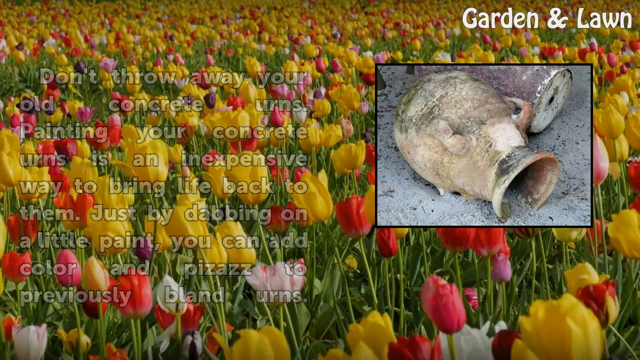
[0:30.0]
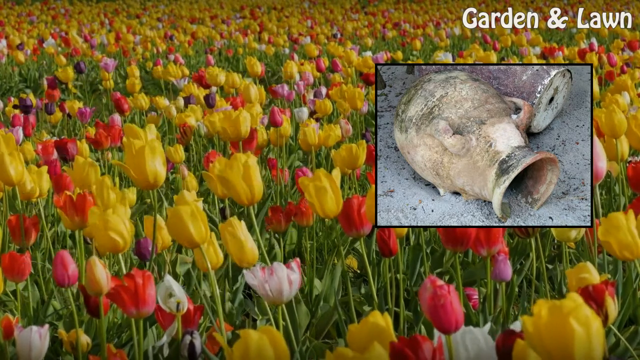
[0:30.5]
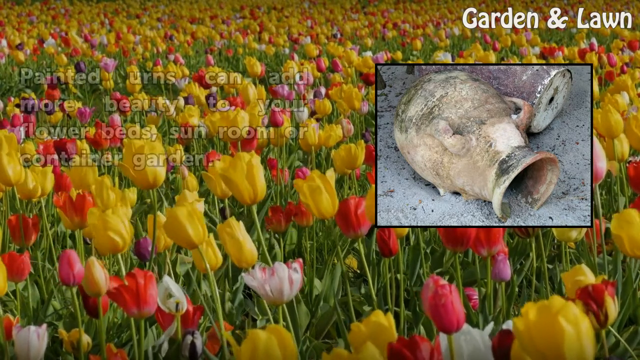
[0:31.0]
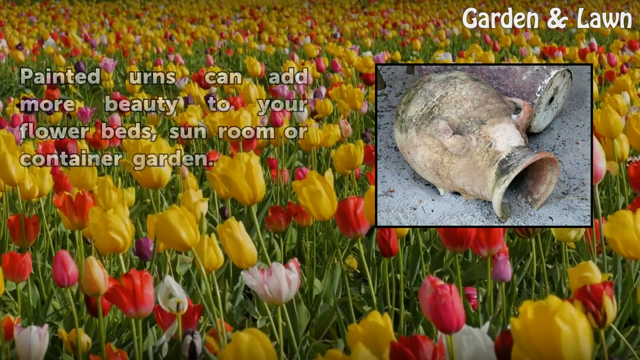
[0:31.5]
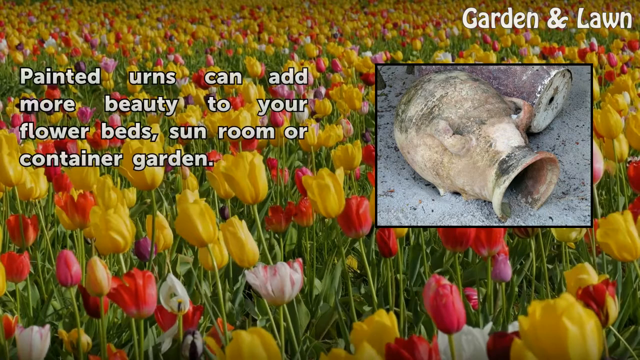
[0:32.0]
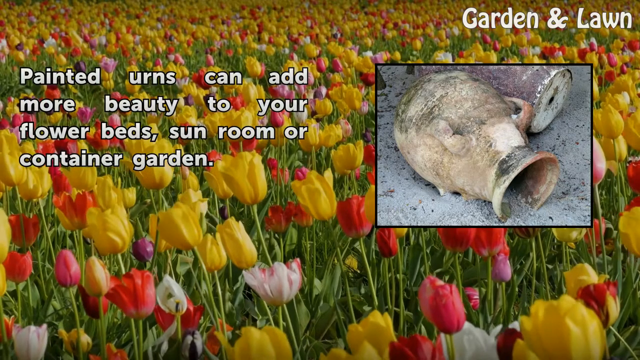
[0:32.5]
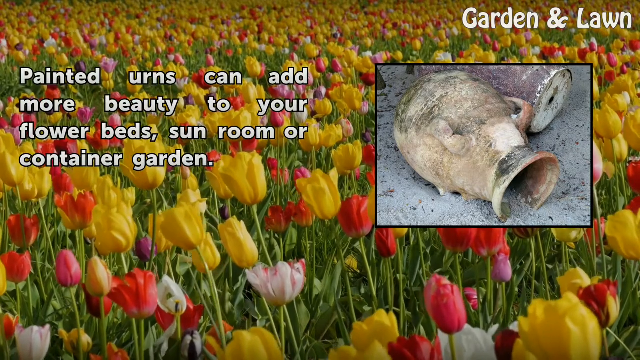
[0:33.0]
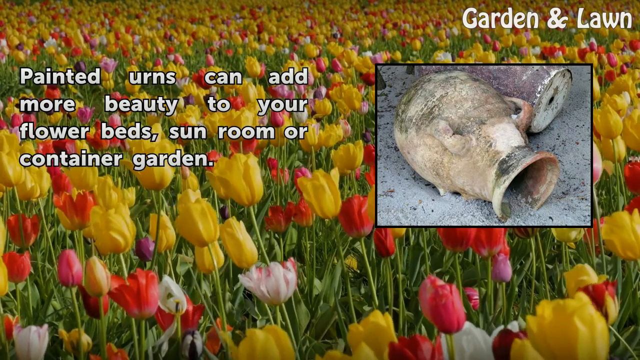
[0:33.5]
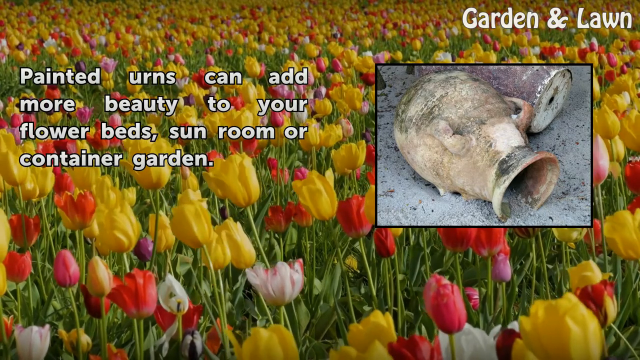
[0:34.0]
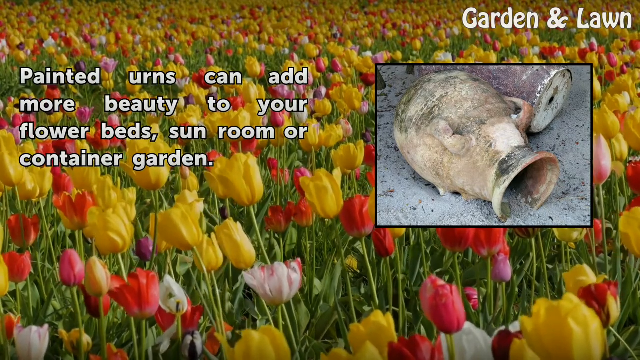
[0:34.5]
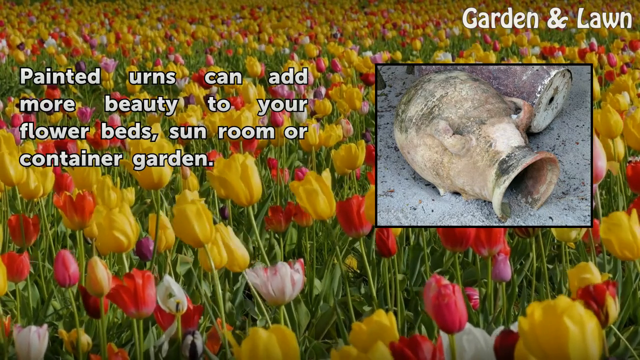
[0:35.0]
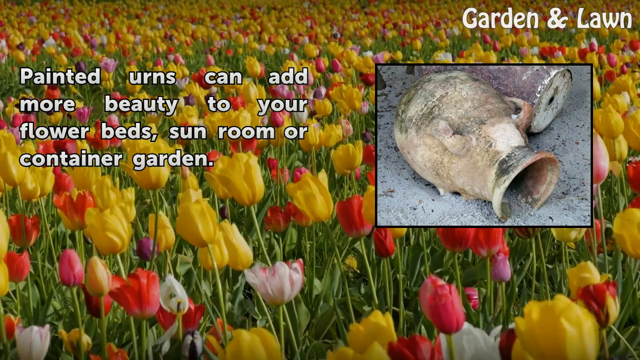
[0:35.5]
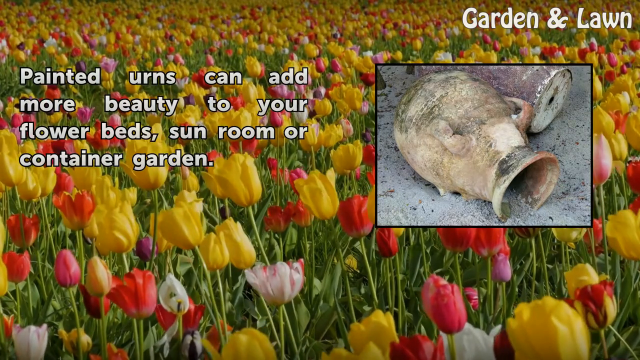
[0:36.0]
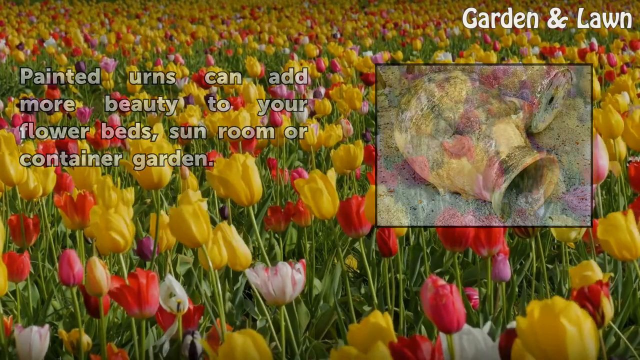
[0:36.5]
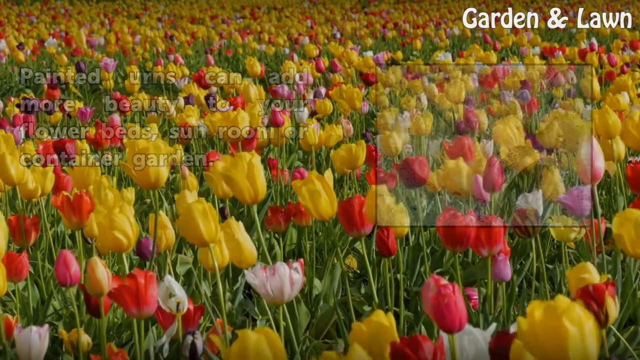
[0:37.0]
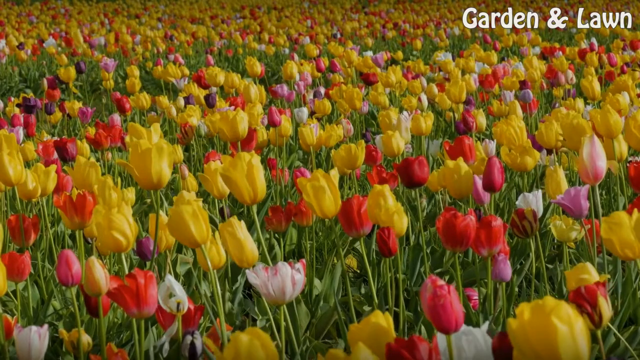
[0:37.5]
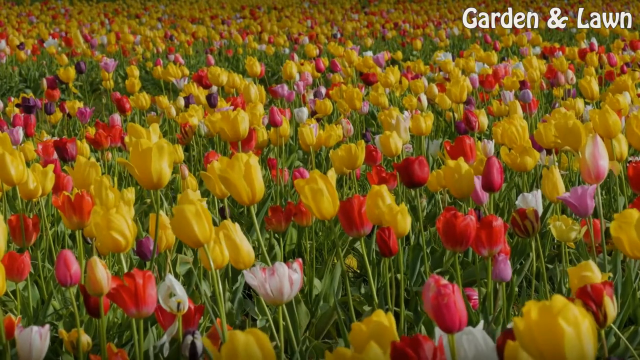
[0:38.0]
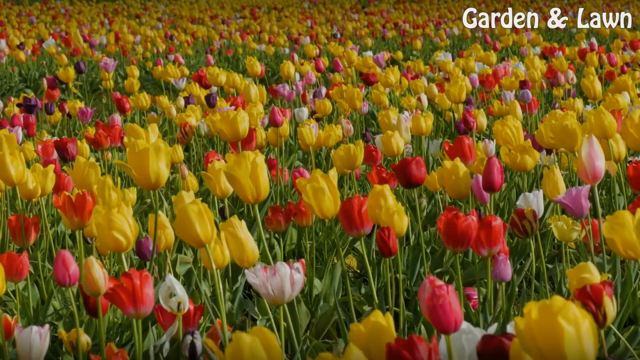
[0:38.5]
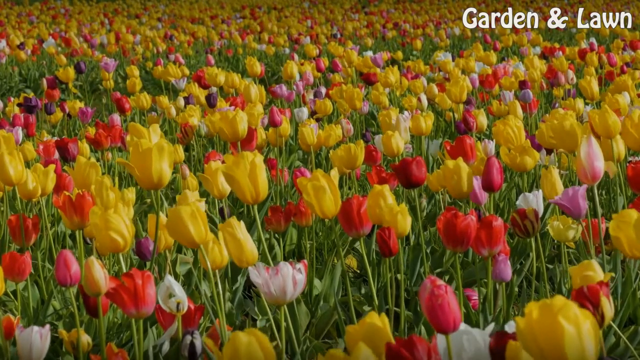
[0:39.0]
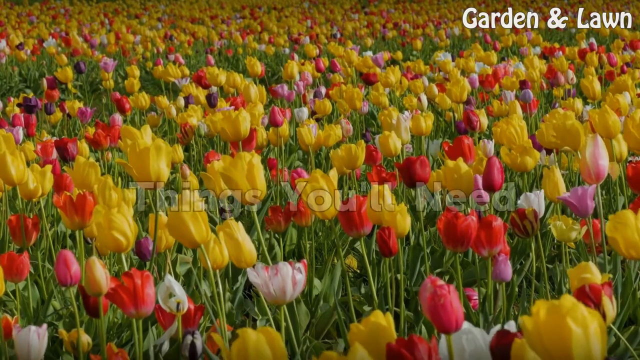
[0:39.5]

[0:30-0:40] Text appears on the left side reading: "painted urns can add more beauty to your flower beds, sun rooms, or container garden," with tulips in the background. The video then focuses on just the field of flowers. The tulips come in a variety of colors: the majority are bright yellow, but there are also bright reds, some fuchsia, and some purples, including a darker purple. The tulip field is fairly large.